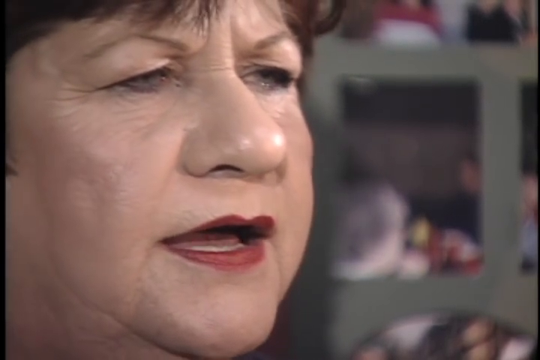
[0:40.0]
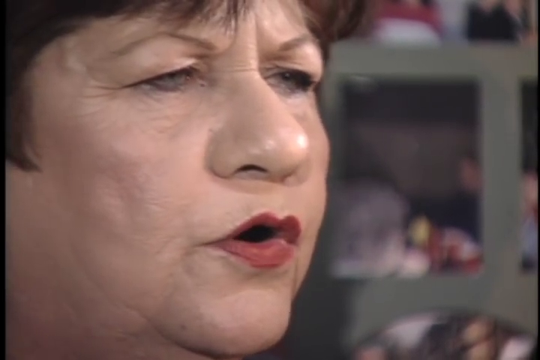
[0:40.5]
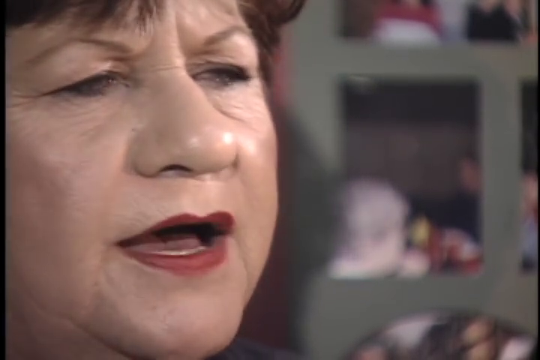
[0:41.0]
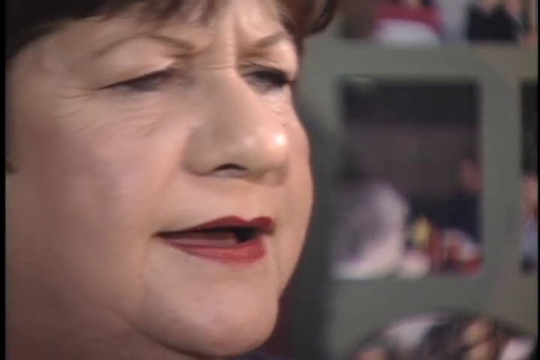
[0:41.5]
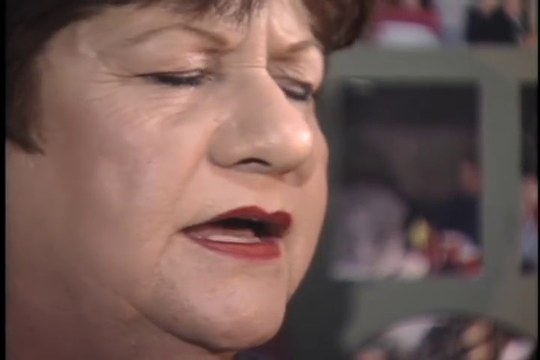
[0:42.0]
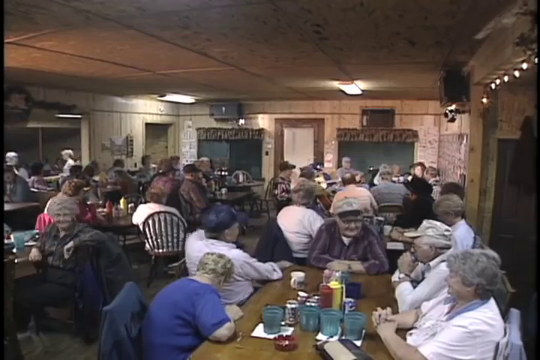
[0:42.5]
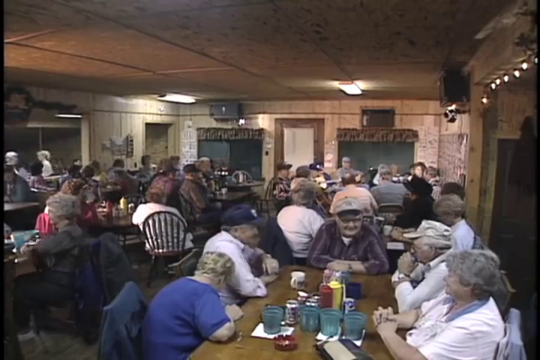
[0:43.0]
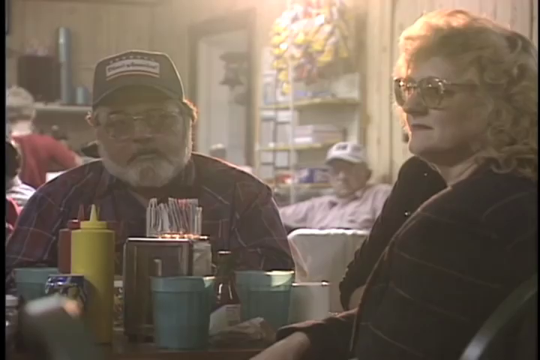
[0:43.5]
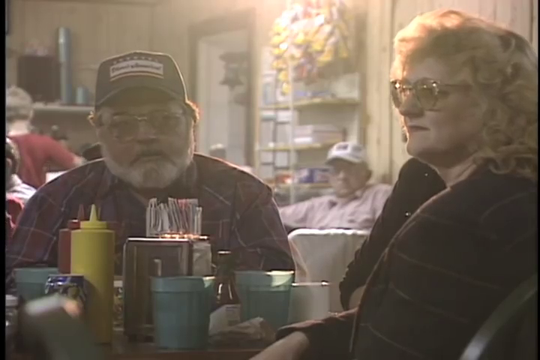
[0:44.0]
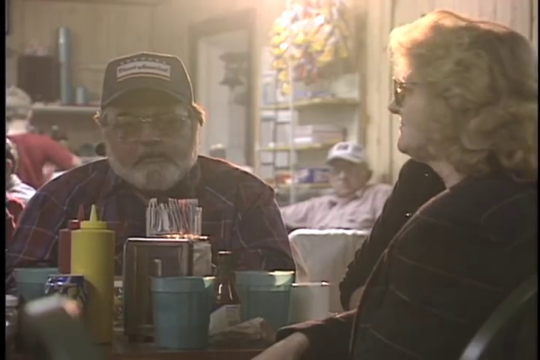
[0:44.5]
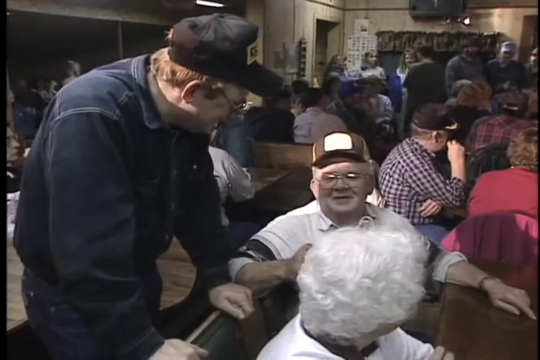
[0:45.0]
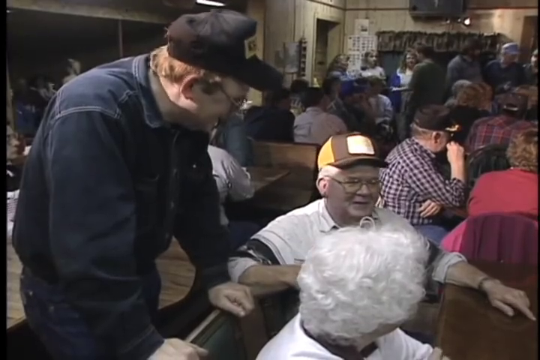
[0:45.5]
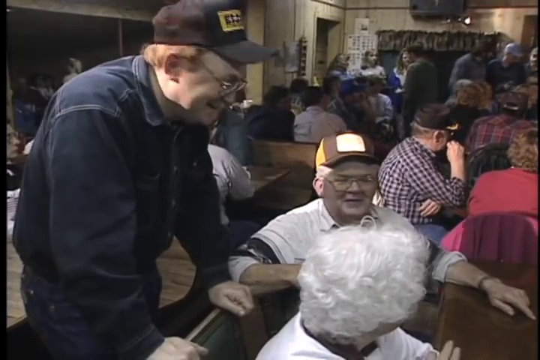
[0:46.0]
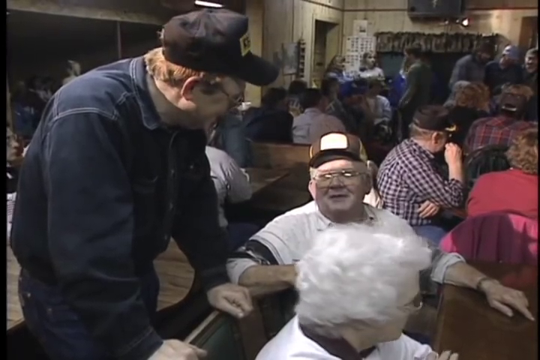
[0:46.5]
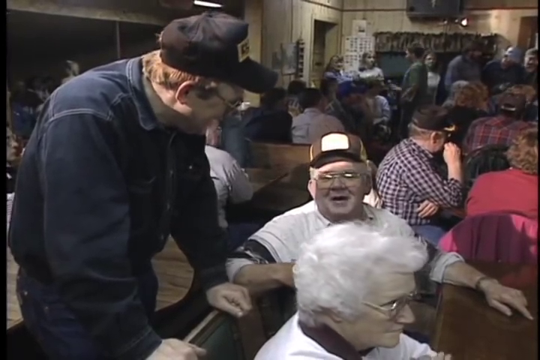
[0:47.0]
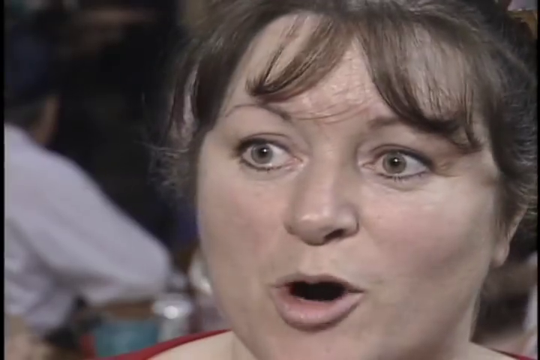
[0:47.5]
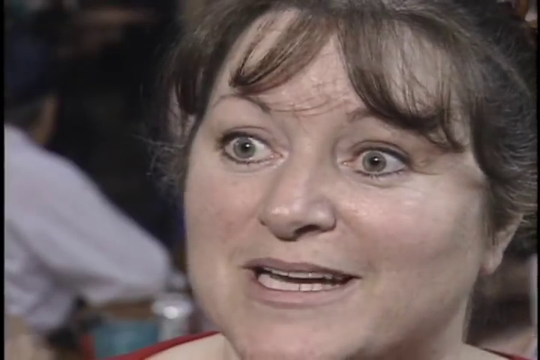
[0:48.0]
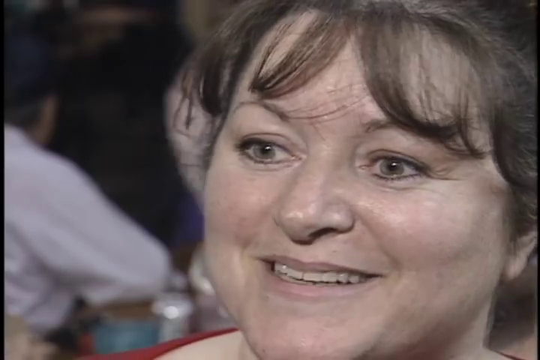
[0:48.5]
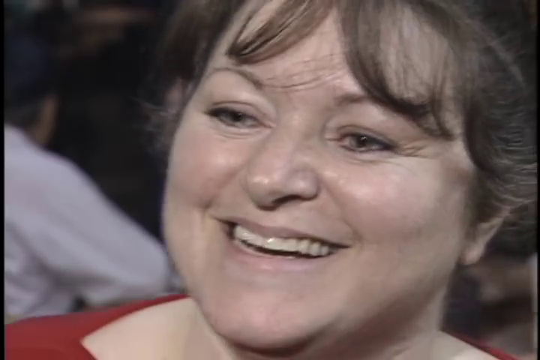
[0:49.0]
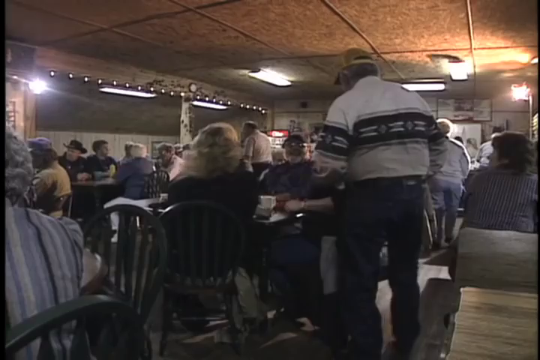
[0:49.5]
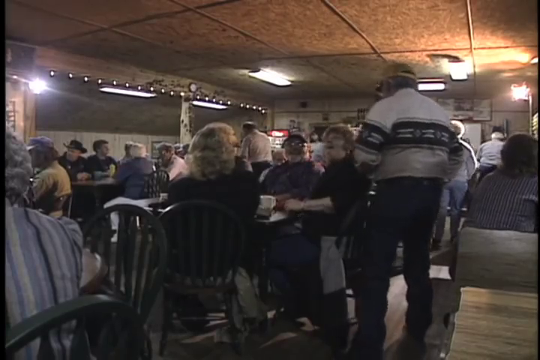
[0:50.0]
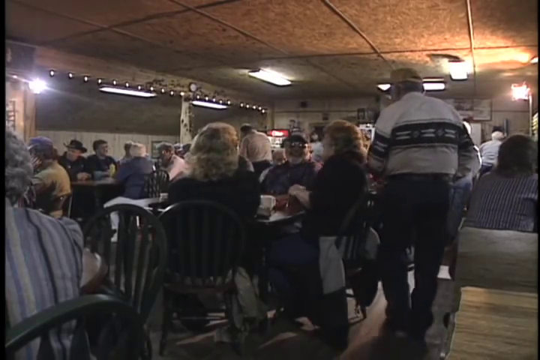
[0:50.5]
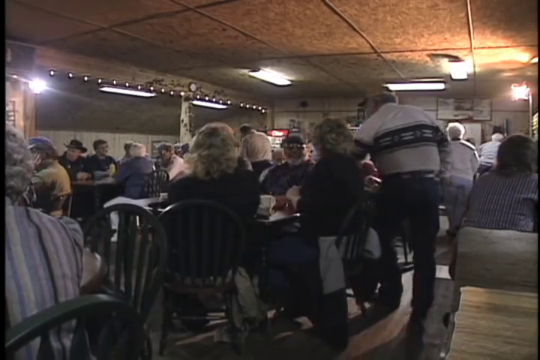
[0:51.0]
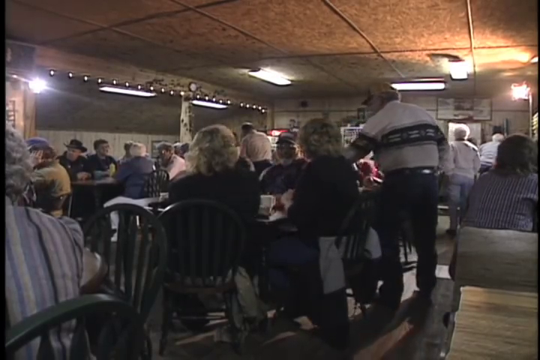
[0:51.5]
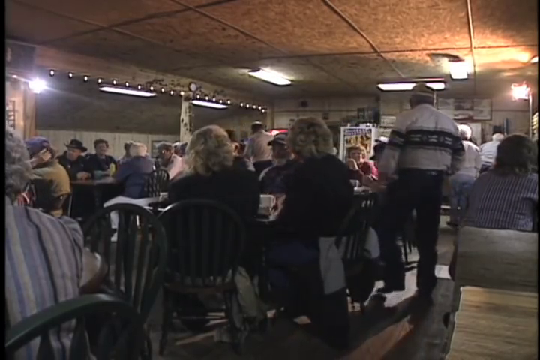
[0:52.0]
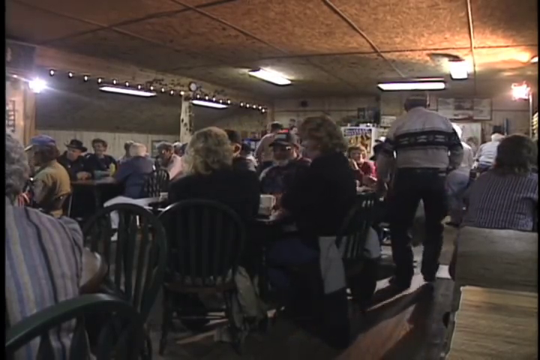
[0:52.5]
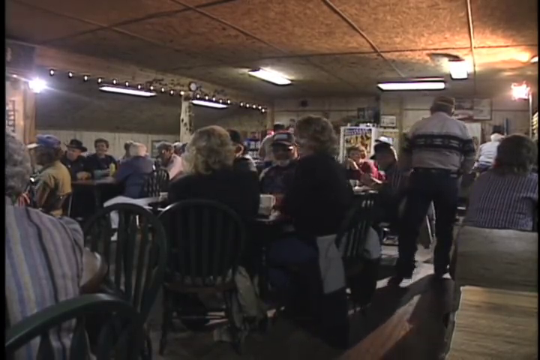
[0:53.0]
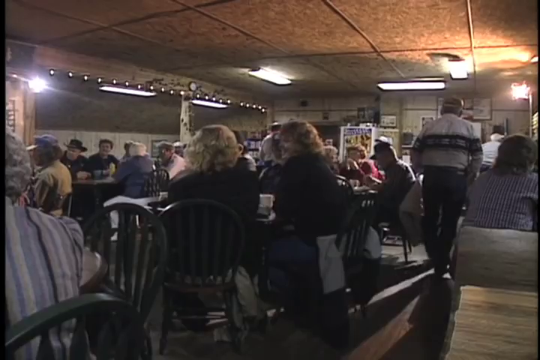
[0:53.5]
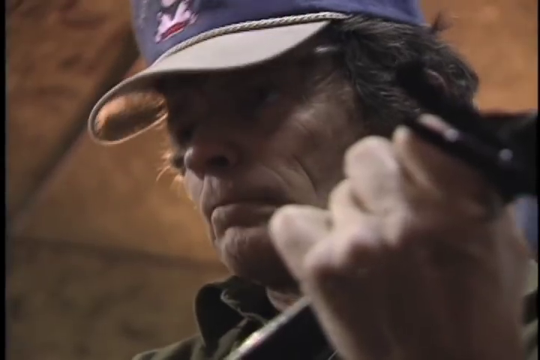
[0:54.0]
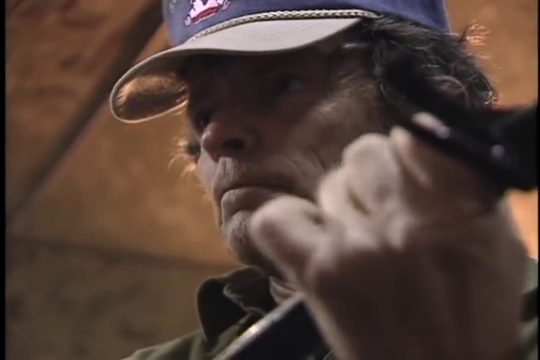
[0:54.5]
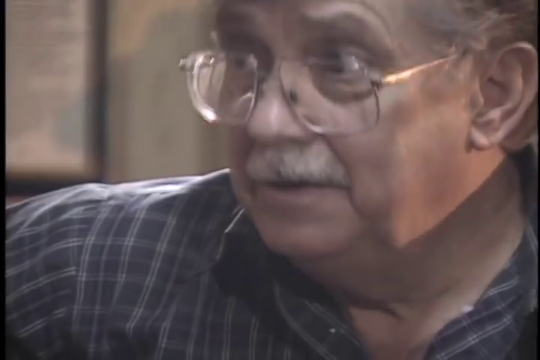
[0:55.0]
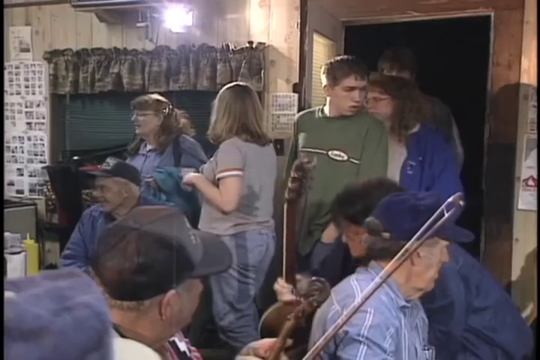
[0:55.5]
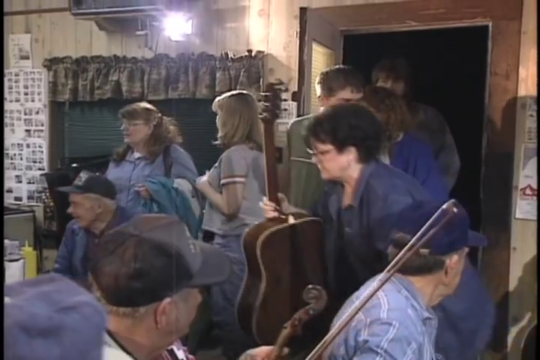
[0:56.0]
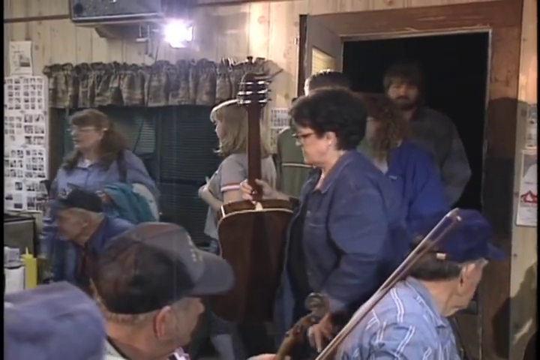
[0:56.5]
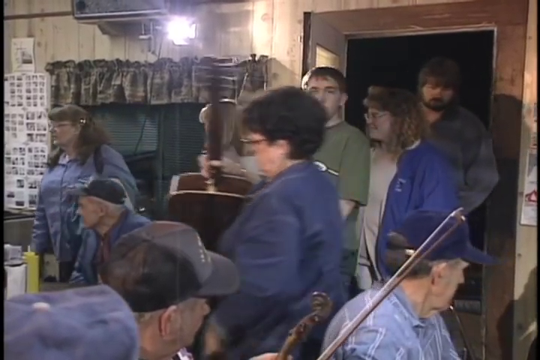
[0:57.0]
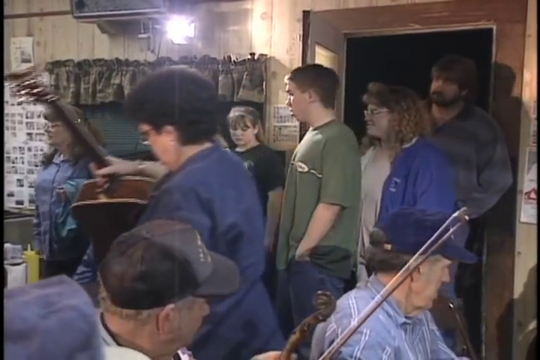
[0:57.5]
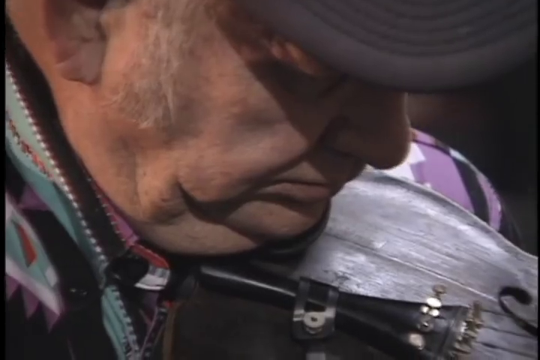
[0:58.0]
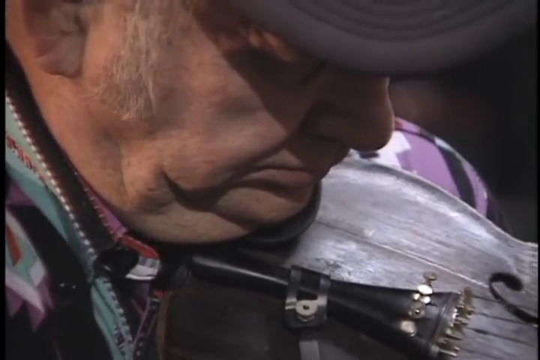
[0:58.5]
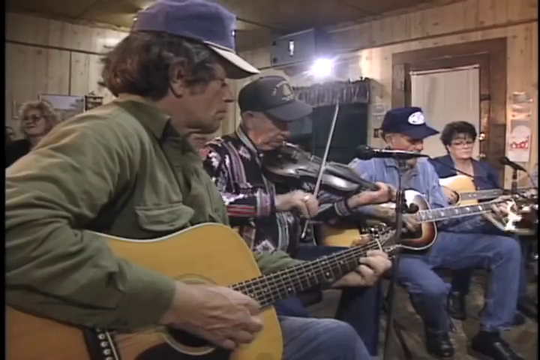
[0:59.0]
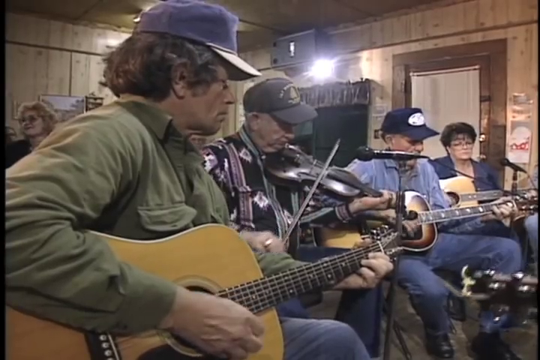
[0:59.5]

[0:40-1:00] The same woman appears on the left-hand side of the screen, showing her right side to the camera and covering over half of the screen in a close-up shot. The background is blurred, but there is some sort of square frame, possibly a shelf. She has red lips as if wearing lipstick and probably foundation makeup on her face. A broader shot of the inside of the premises shows lots of tables with various people sitting around them. Many of the men wear peaked caps. The crowd is generally quite old, though some people are maybe only in their 30s or 40s; no children are visible at this point. People are intermittently seen playing stringed instruments, either guitars or violins.